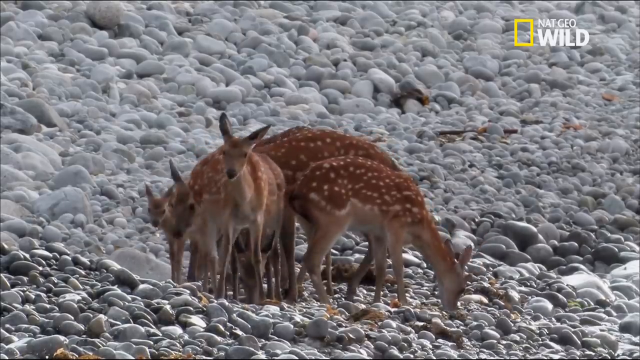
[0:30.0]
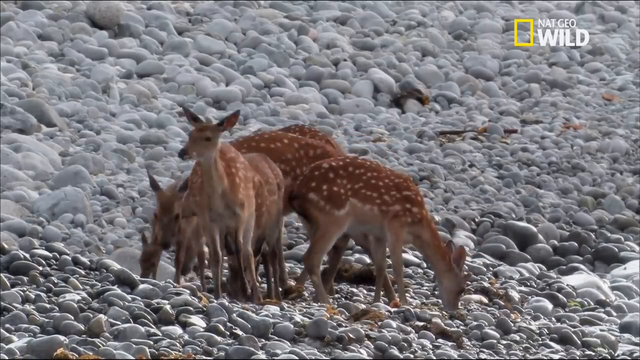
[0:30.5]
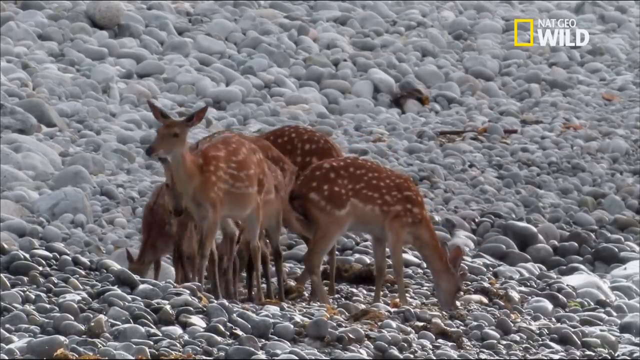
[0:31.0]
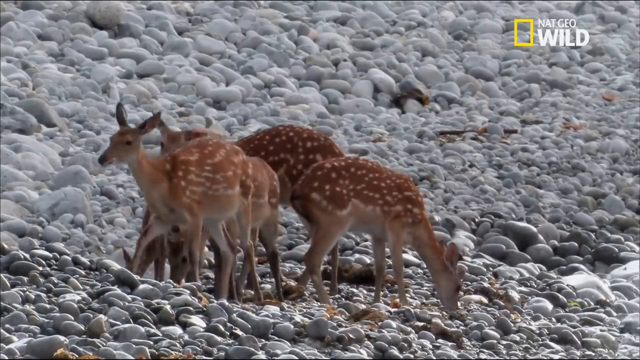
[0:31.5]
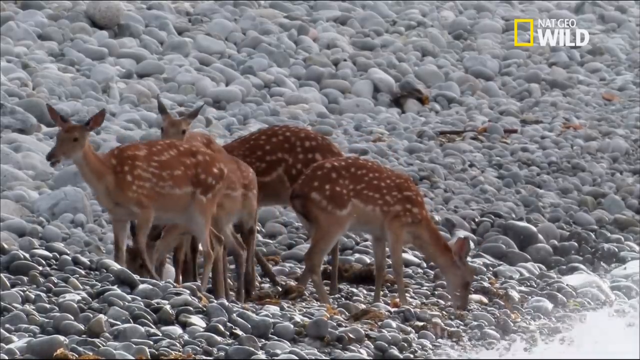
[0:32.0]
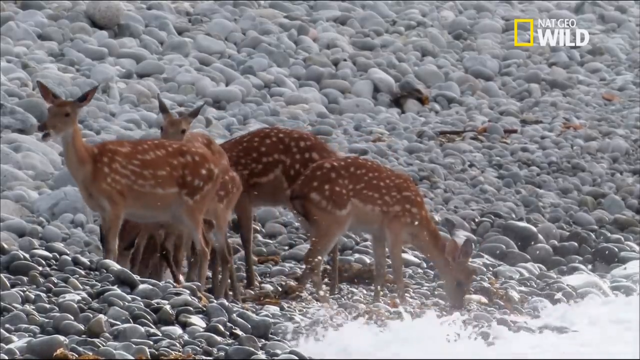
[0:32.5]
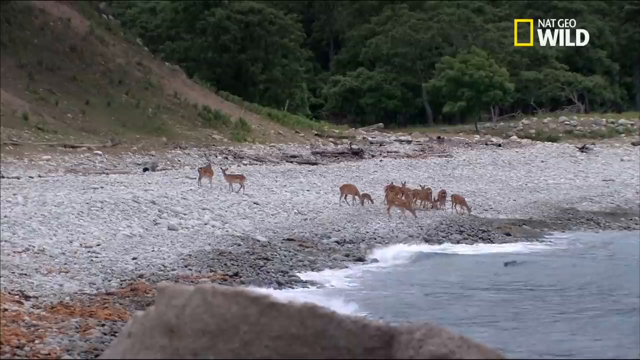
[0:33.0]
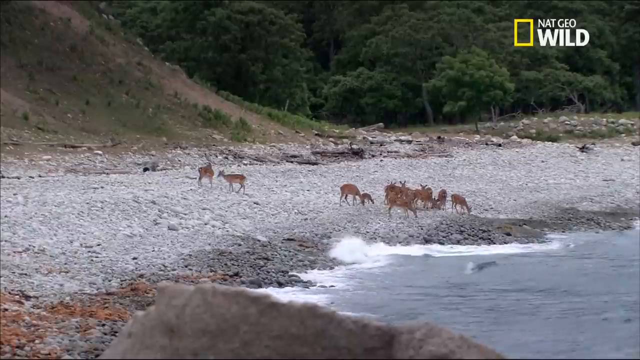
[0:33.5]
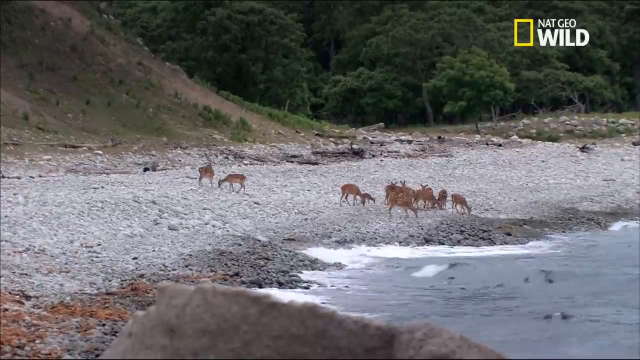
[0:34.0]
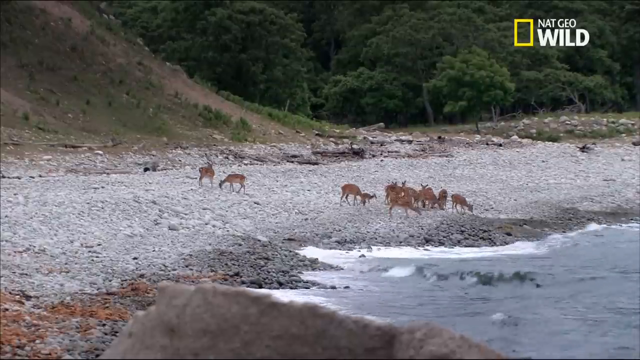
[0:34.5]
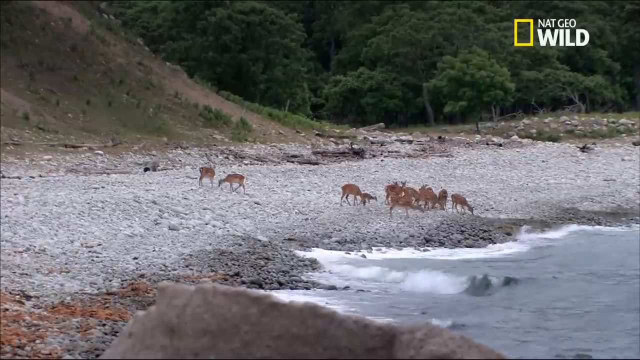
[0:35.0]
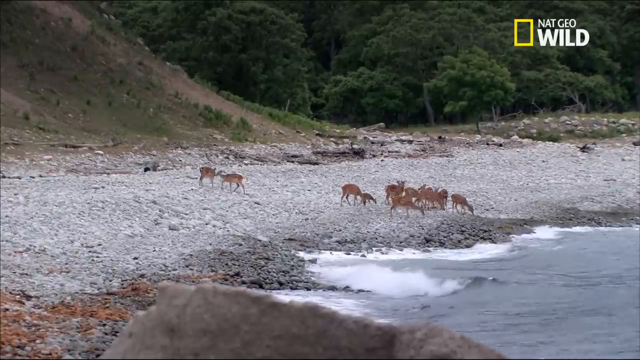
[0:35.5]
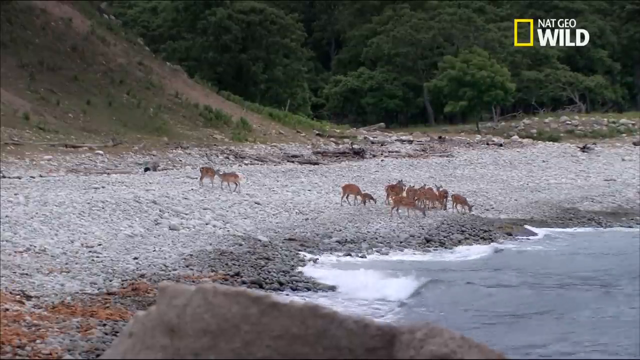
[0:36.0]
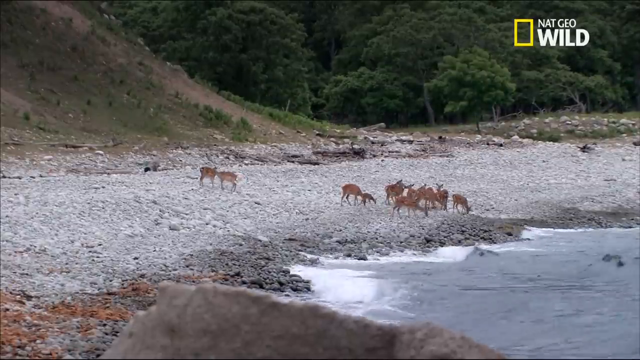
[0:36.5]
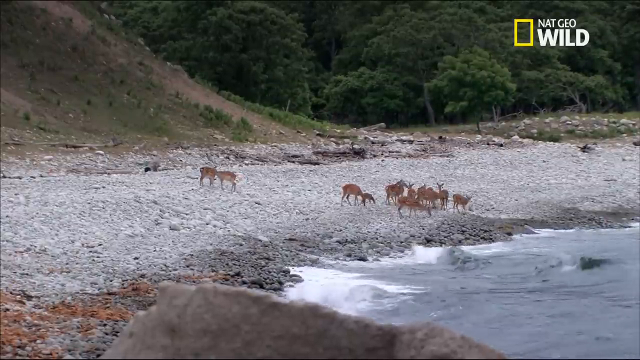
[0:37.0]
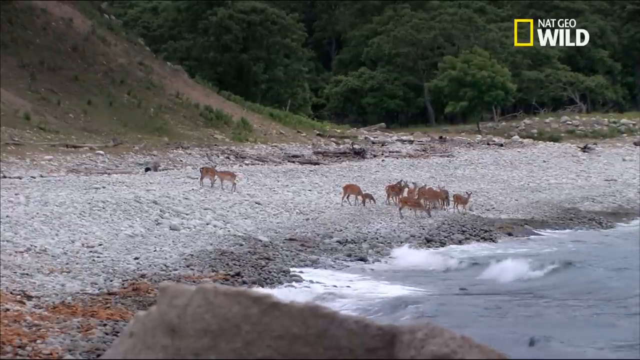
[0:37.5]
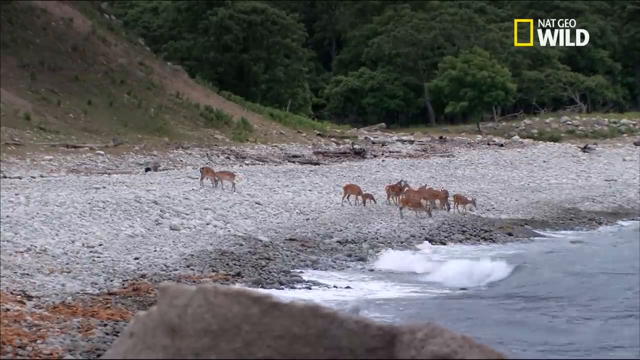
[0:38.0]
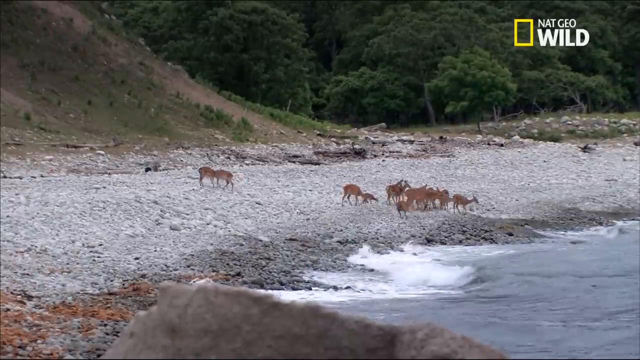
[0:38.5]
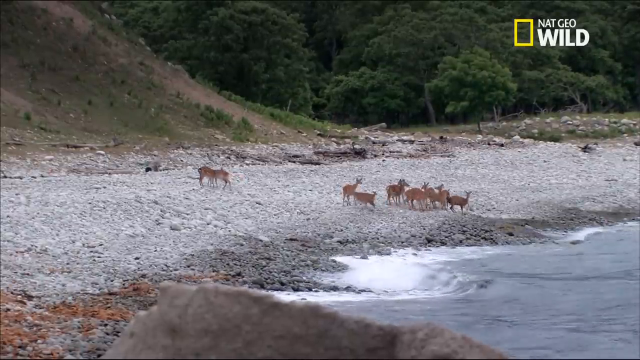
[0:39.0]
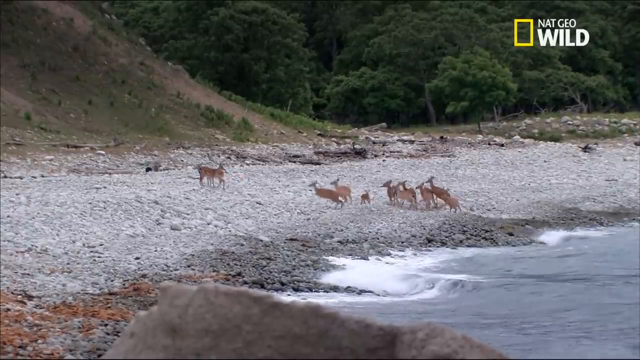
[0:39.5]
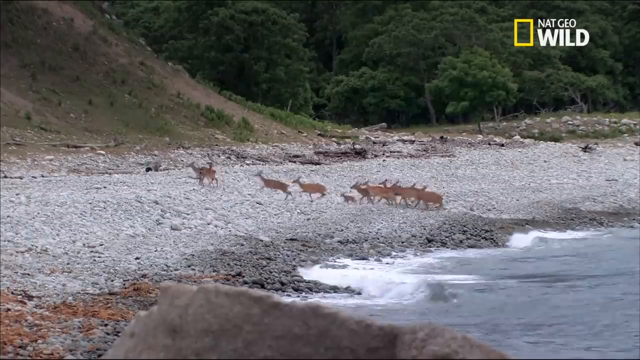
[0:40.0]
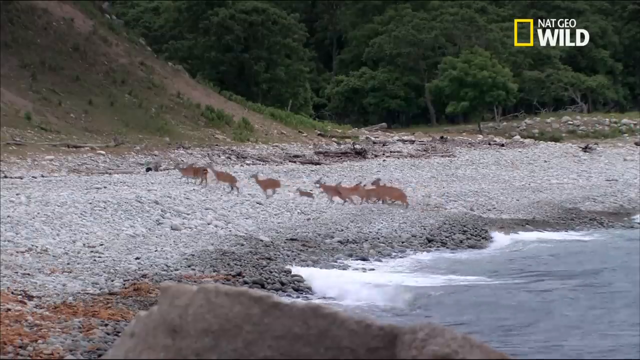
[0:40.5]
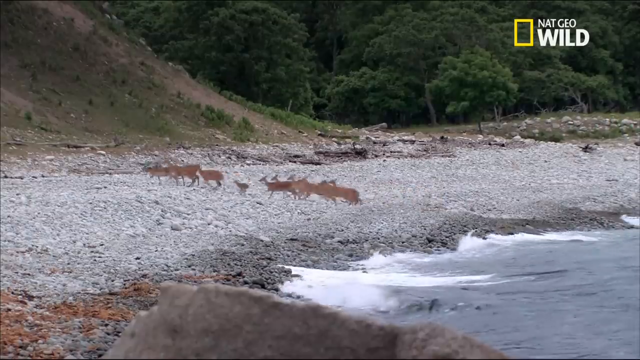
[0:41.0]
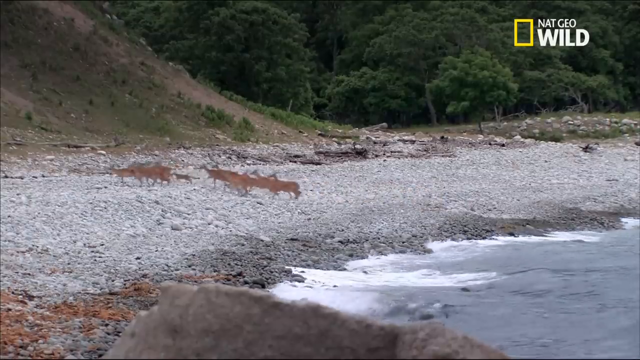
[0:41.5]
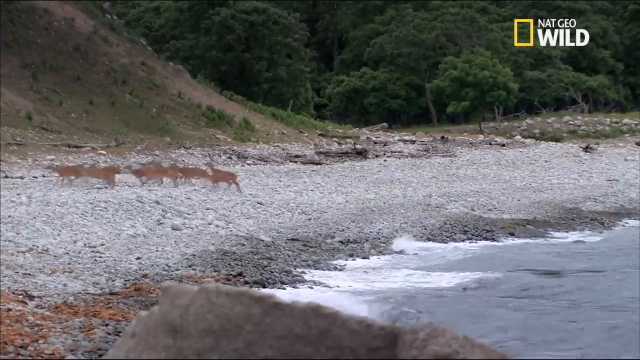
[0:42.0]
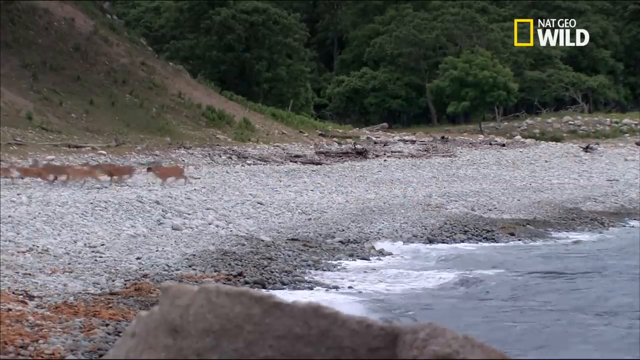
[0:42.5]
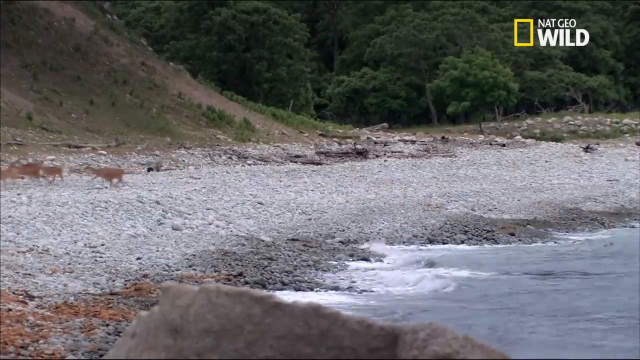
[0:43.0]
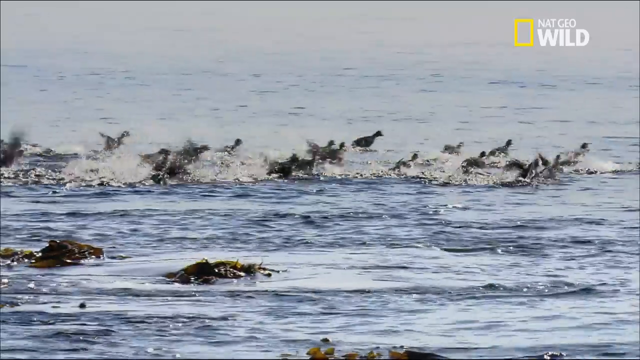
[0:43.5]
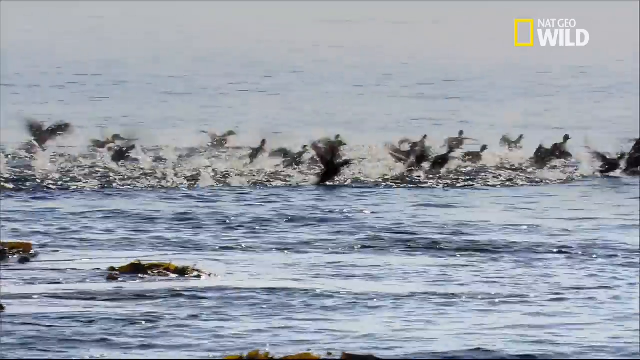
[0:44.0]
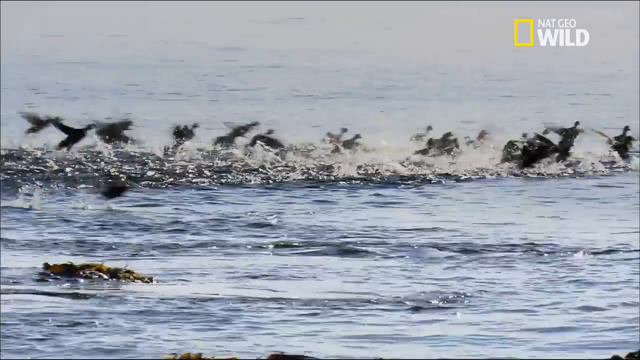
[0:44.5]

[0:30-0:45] The deer are still huddled together on the shoreline, scavenging for food that appears to be some sort of vegetation, most likely washed up from the beach. Water keeps moving up on them. The camera zooms out, revealing many more deer to the left of the herd, searching for food farther up the shore. Partway through, something startles the deer, and they all stop feeding and run toward the left. The camera then pans out to show the water deeper out, where many birds, seemingly about 20 to 30, are flying and fluttering across the surface of the water. They are spooked as well and fly to the right as fast as they can.